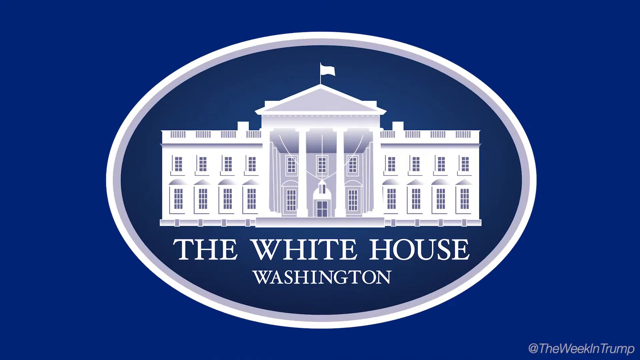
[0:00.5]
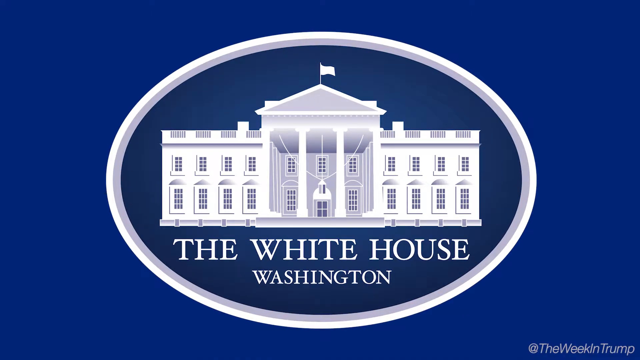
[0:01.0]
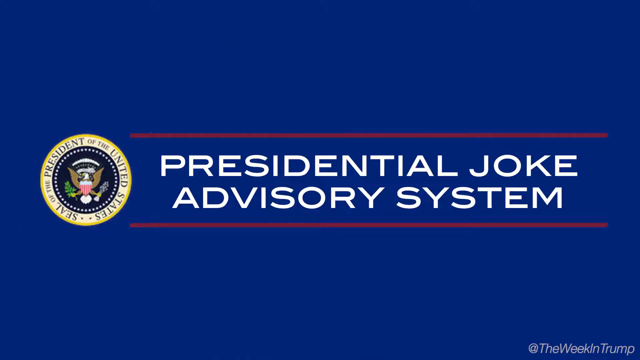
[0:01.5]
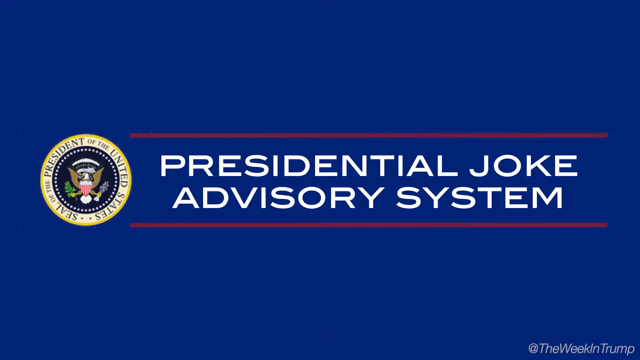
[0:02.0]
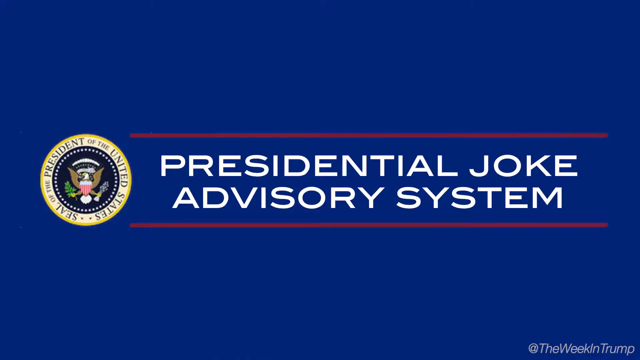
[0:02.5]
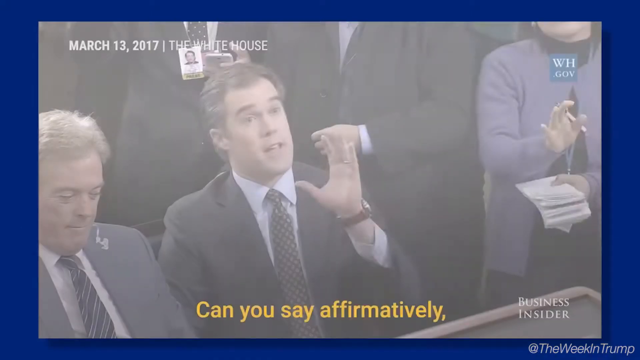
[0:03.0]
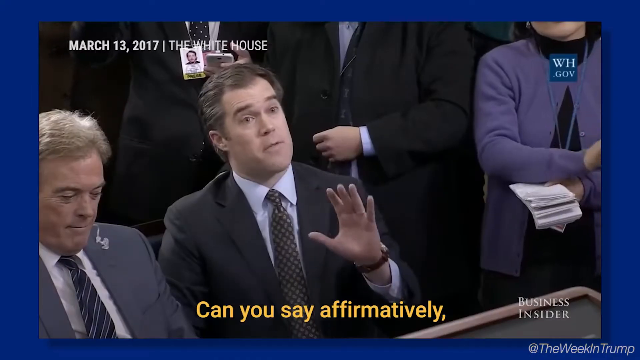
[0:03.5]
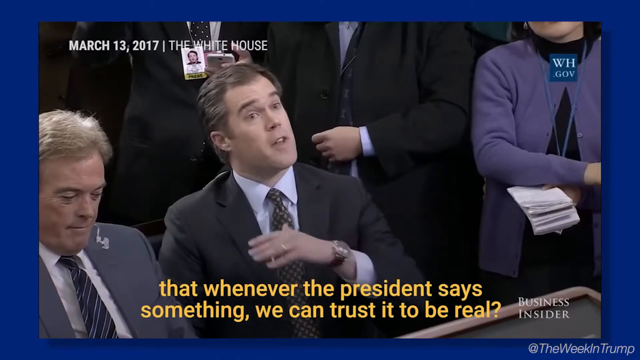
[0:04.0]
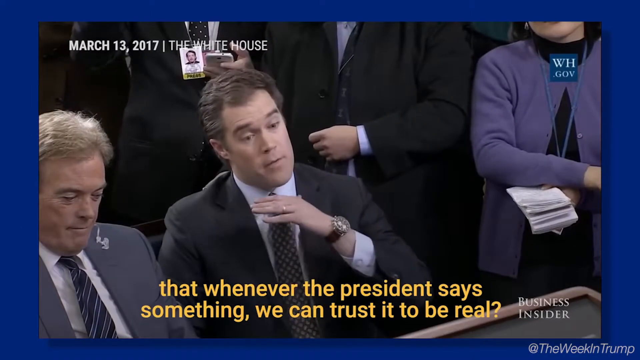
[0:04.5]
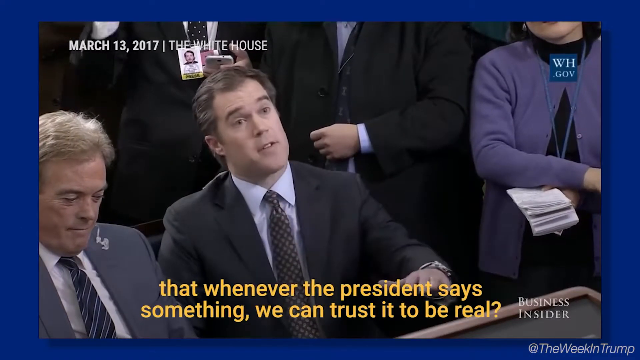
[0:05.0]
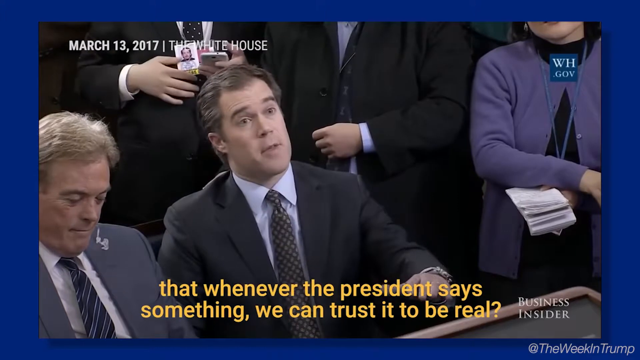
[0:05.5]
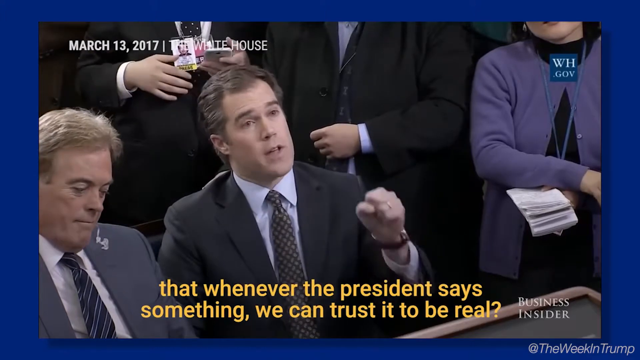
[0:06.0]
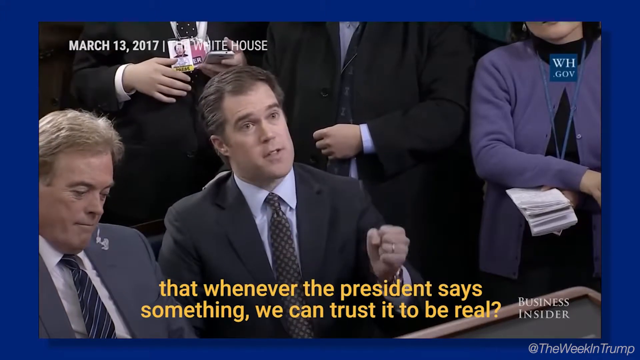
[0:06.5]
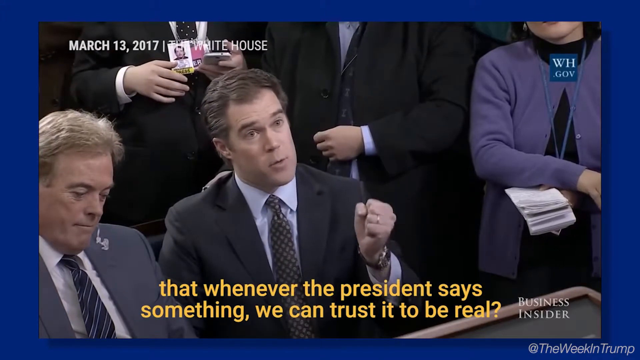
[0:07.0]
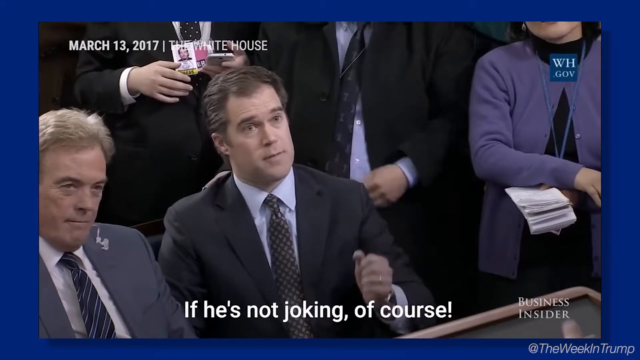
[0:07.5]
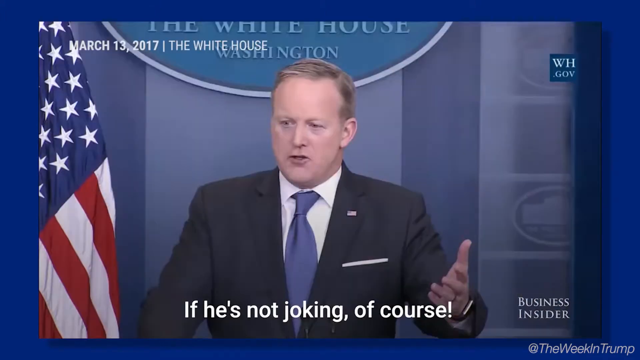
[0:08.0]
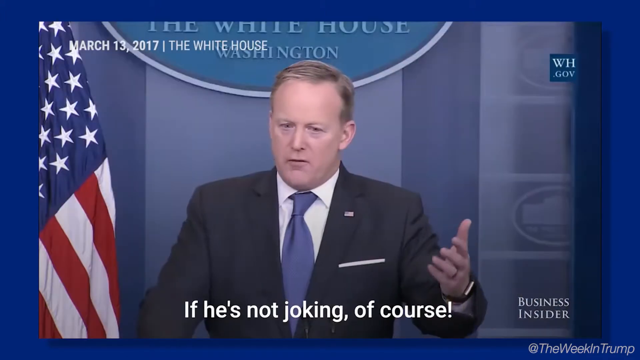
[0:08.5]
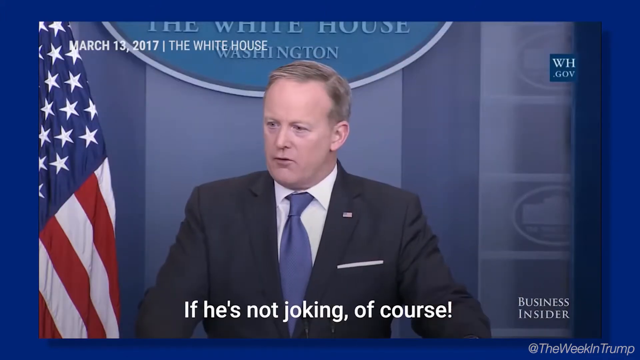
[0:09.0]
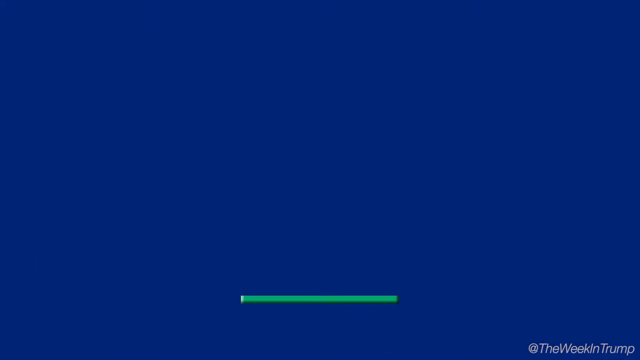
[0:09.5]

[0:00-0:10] The video opens on a background that reads "the White House, Washington," with a picture of the White House inside an oval and white text underneath. Text then reads "Presidential Joke Advisory System" in all-capital white letters with a red line above and below it, and a small president symbol to the left. The scene moves inside what looks like the White House press room, where a man, apparently a news reporter, is sitting down and asking a question while motioning with his hands. Yellow text at the bottom of the screen shows his question: that whenever the president says something, he can trust it to be real. The video then cuts to the man responding, who wears a suit and stands at the podium; he says, "if he's not joking, of course."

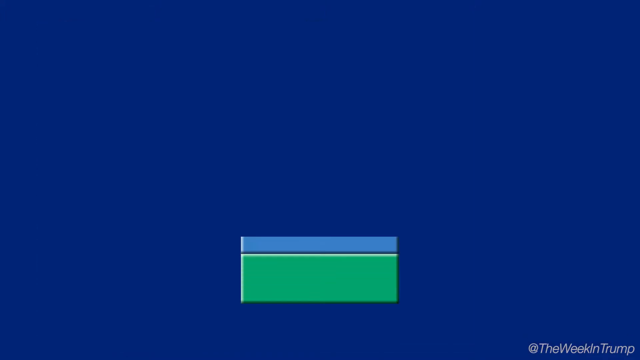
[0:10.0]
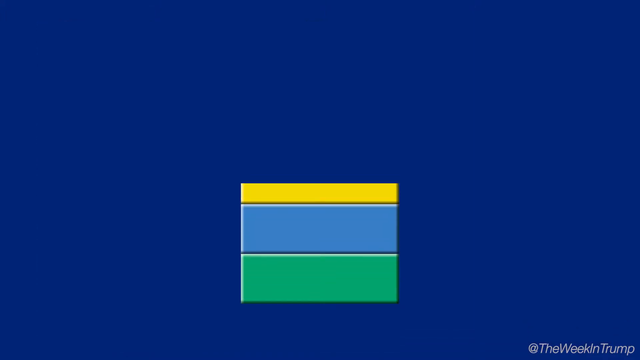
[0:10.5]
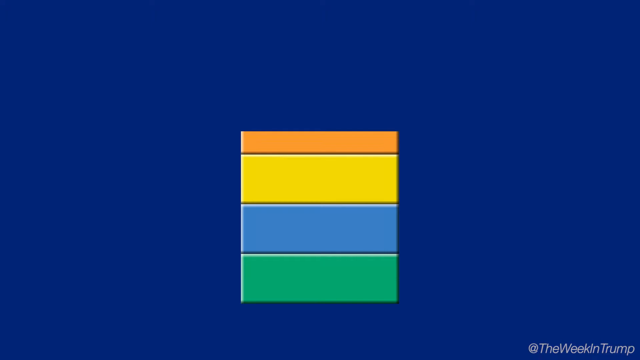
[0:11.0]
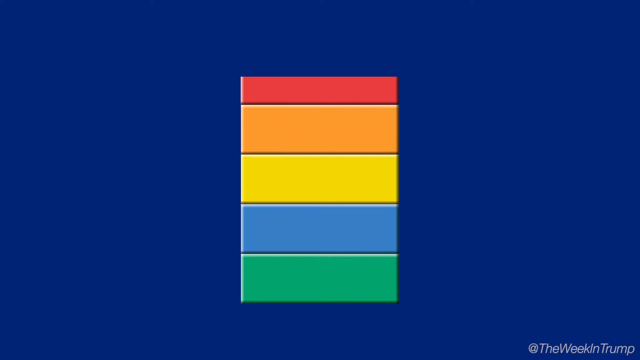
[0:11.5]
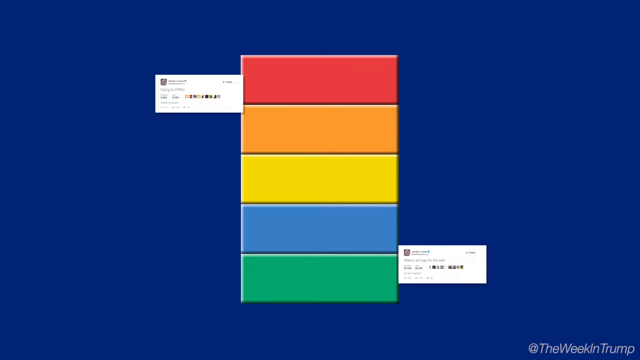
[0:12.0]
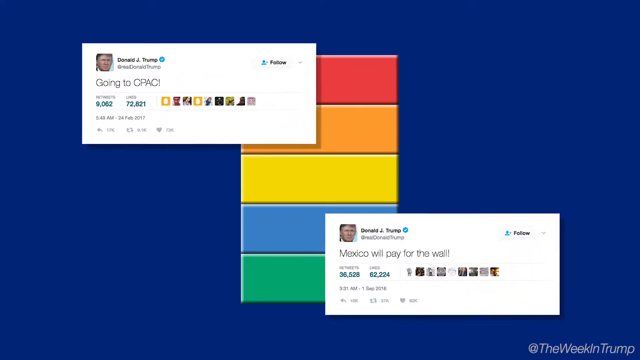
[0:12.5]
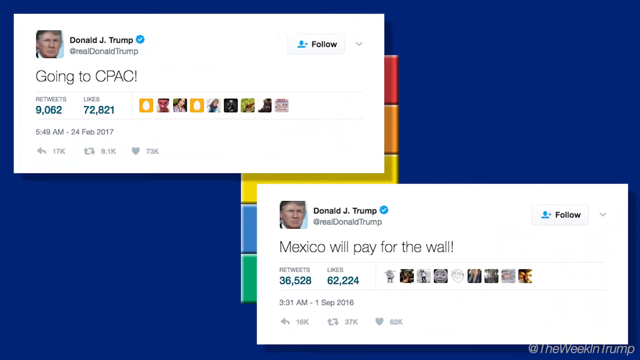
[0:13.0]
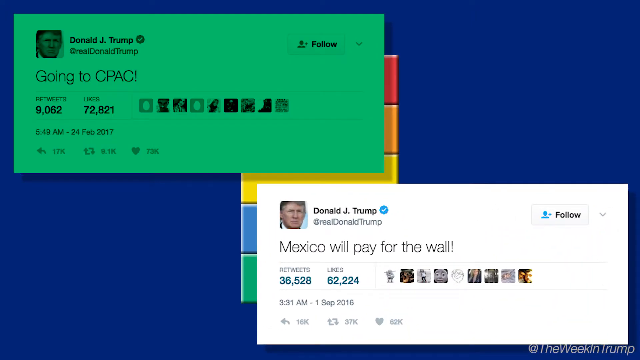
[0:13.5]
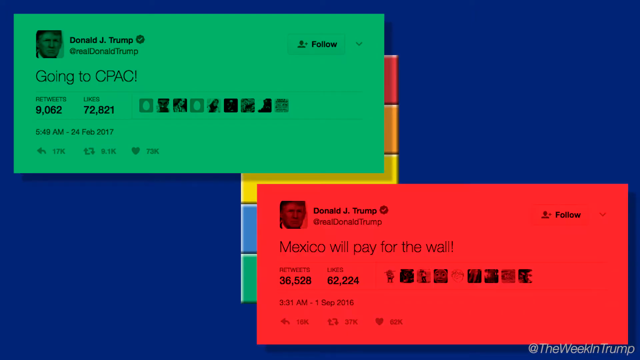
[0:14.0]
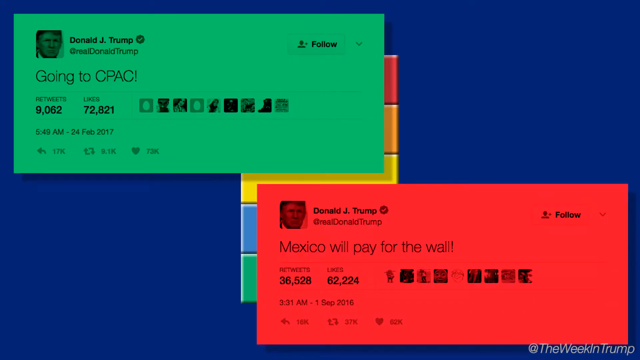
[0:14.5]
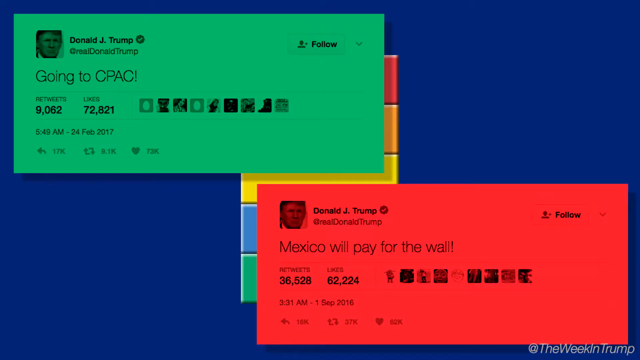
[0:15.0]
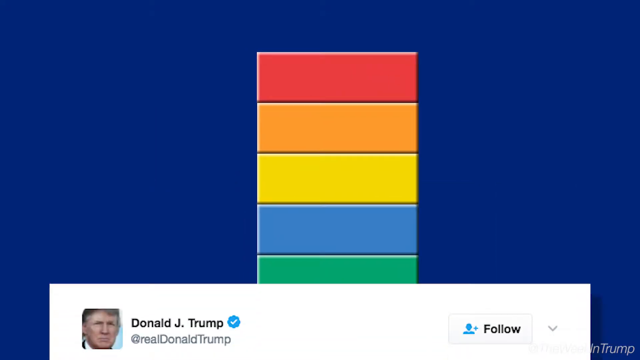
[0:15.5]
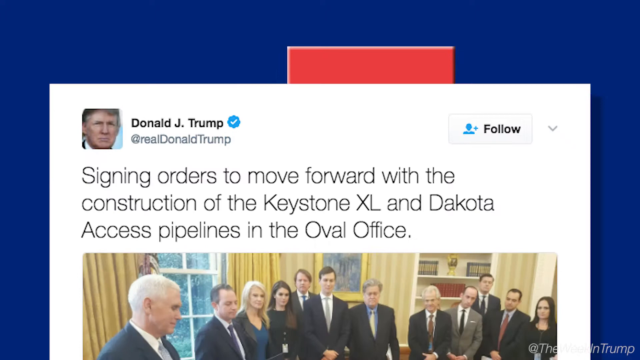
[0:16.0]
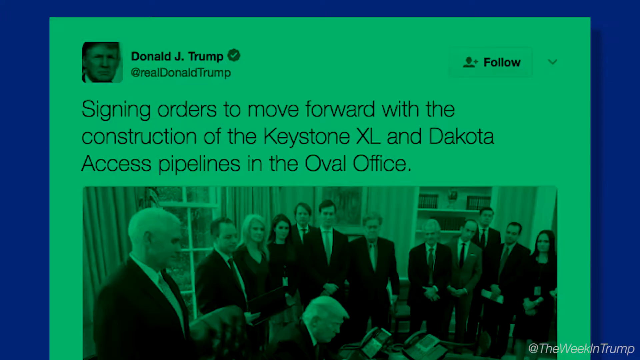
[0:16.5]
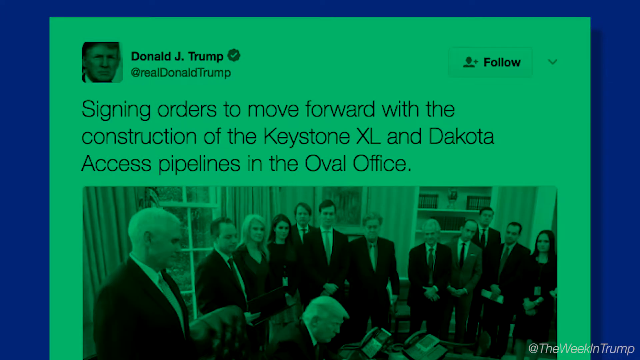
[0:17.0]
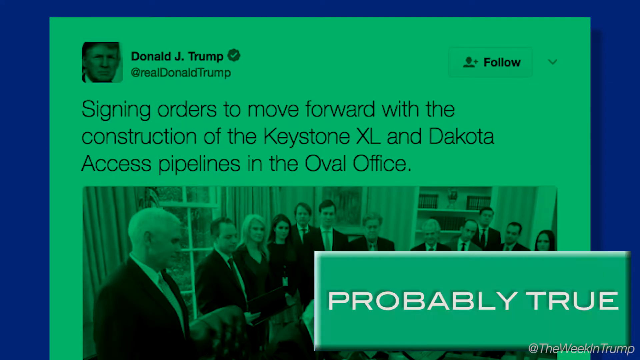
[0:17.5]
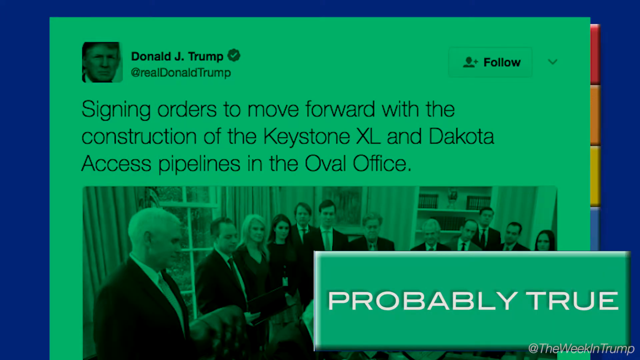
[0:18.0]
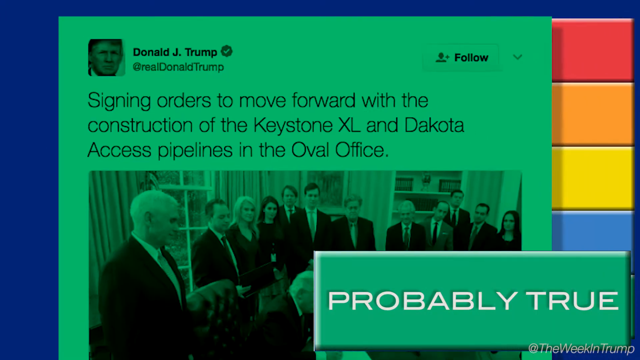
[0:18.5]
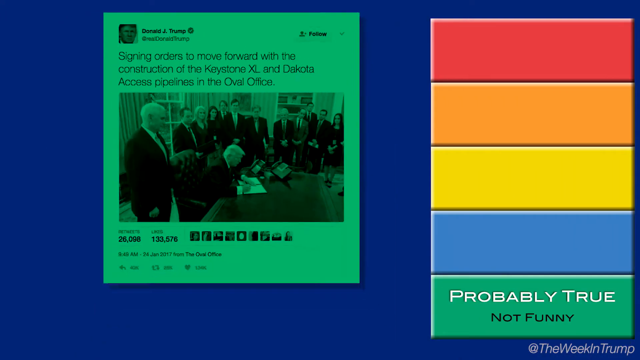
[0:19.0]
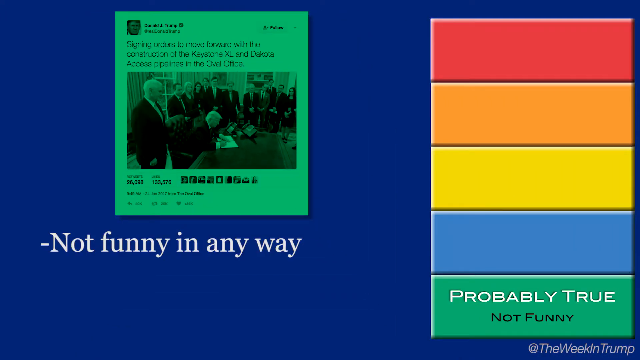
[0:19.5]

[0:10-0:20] A burst of rainbow colors appears, followed by two Twitter posts from Donald Trump. The one on the top left, colorized in green, says "going to CPAC," and the one on the bottom right, colorized in red, says "Mexico will pay for the wall." A larger Twitter post then appears, reading "signing orders to move forward with the construction of the Keystone XL in Dakota Access Pipelines in the Oval Office." Below it, at the bottom right, a label says "probably true."